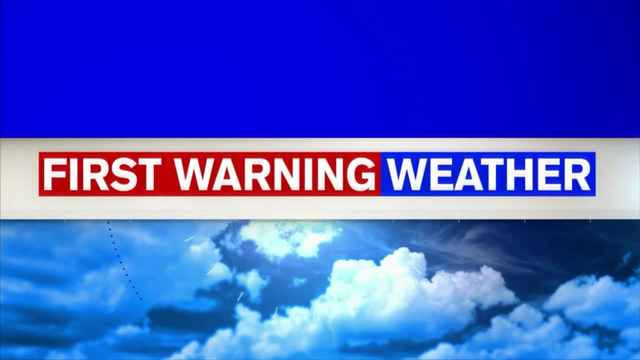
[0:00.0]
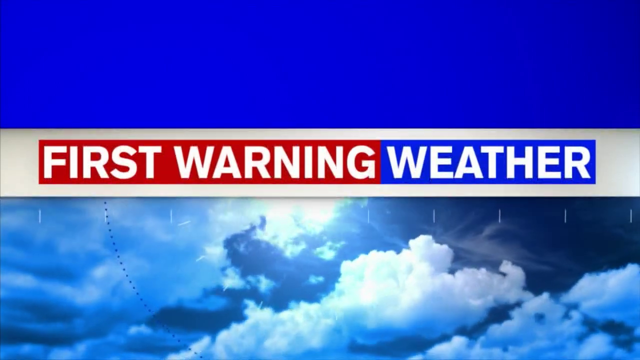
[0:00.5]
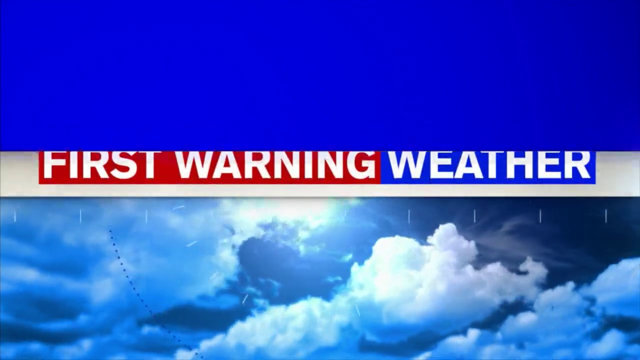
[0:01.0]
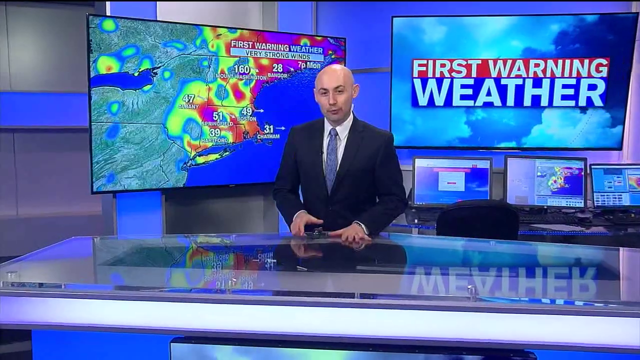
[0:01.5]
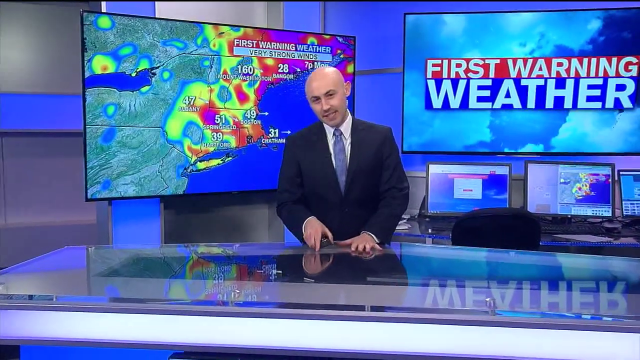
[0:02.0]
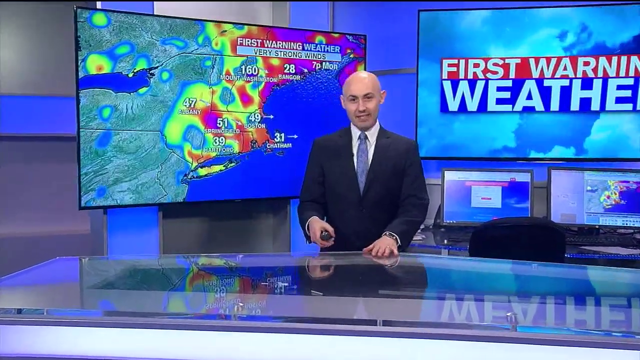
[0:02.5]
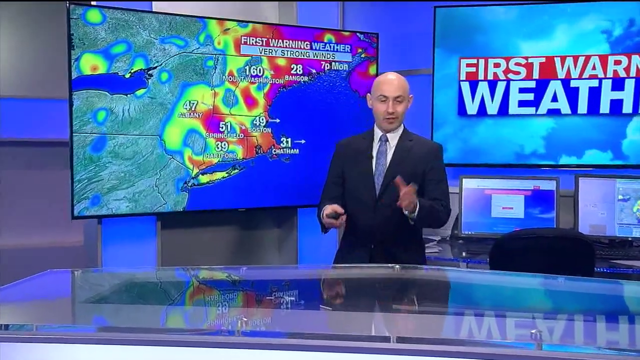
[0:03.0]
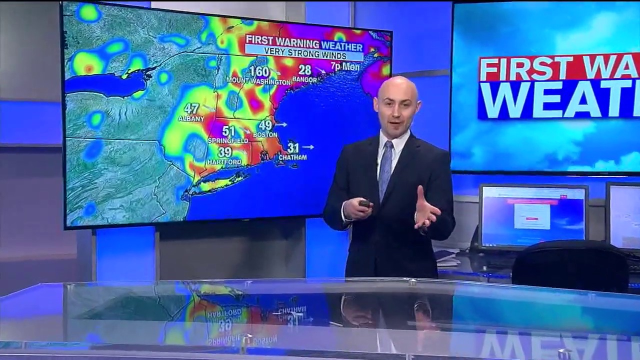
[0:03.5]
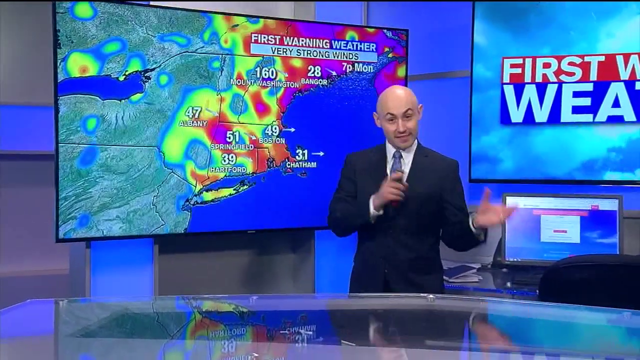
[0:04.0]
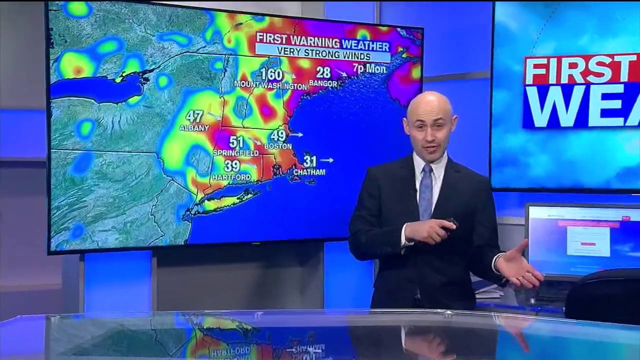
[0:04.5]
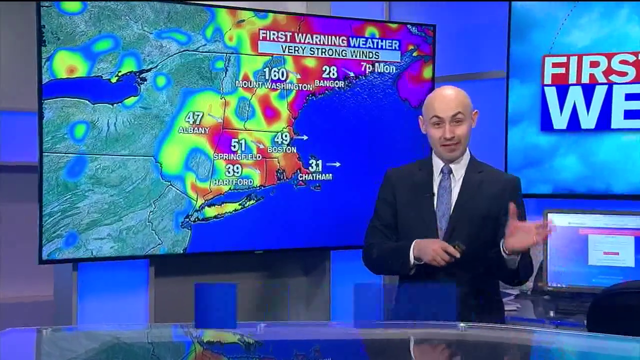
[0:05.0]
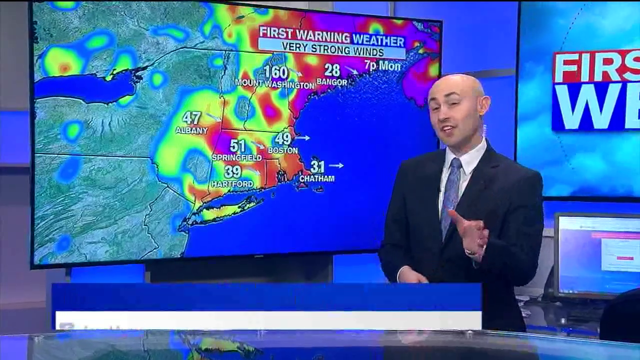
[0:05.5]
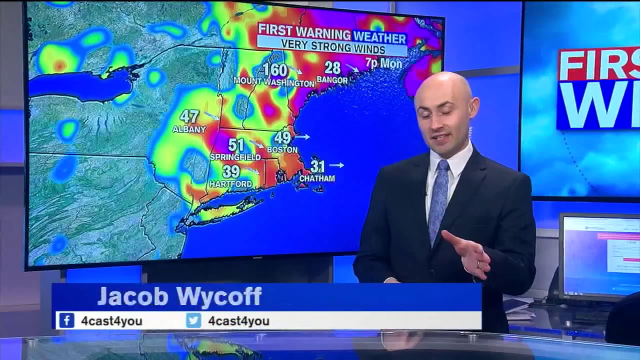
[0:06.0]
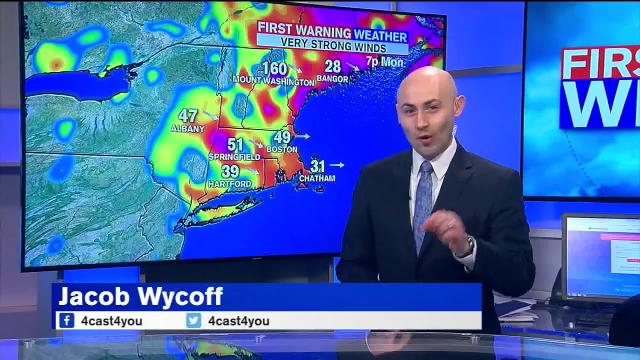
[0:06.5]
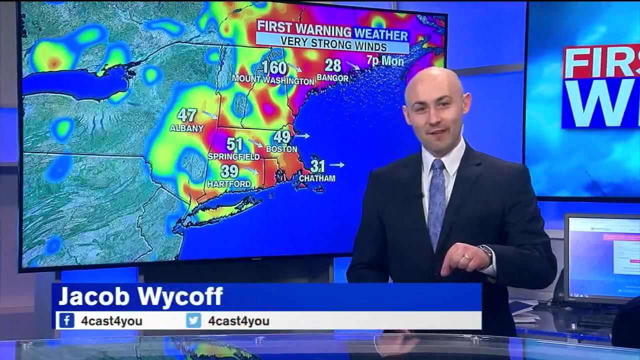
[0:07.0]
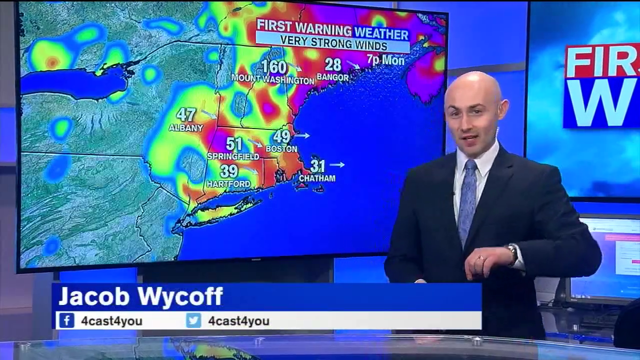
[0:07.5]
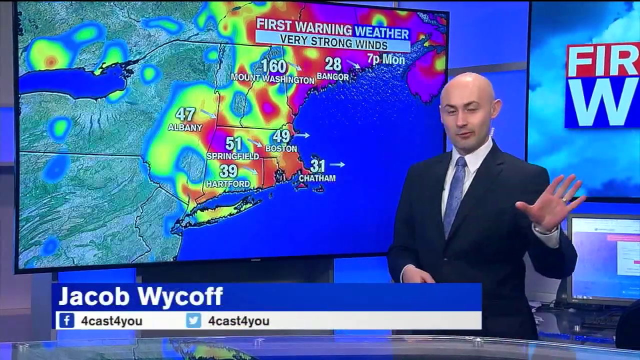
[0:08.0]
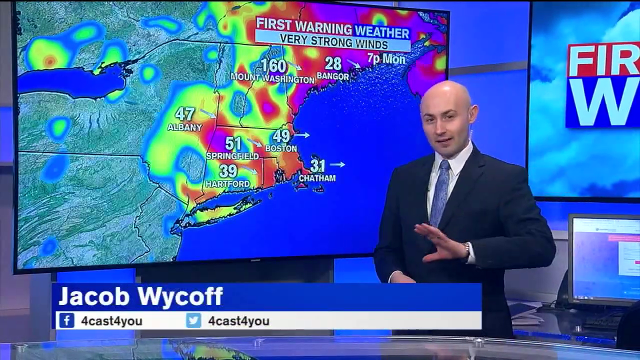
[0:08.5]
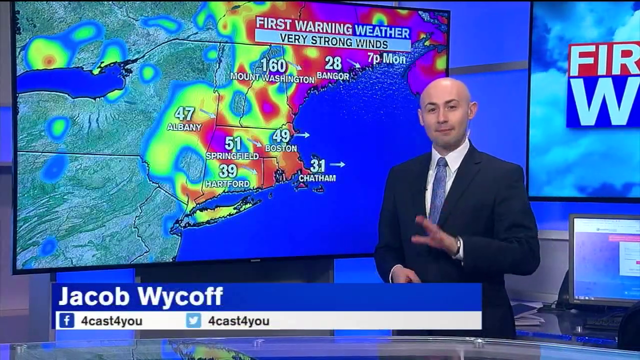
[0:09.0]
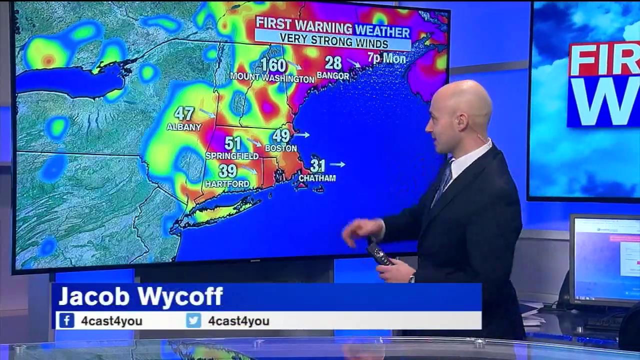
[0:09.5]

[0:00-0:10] The video opens with the text "First Warning Weather" written in white on a red and blue rectangular background, set over a dynamic cloud effect with a blue and white rectangular background. It then transitions to a news studio, where a bald man named Jacob Wycoff seems to be about to present the weather report. He is wearing what is possibly a navy blue jacket, a white shirt and a light blue tie, and holds a black electronic device in his right hand. Behind him is a digital screen showing a weather map with weather information displayed at different places. The text "First Warning Weather" and "Very Strong Winds" is visible in the top right corner of the screen. The man turns to the screen and points at it.